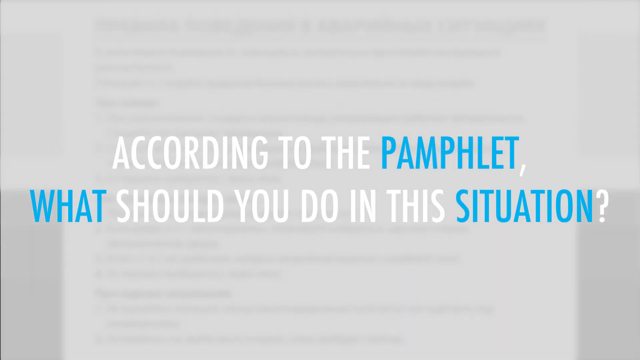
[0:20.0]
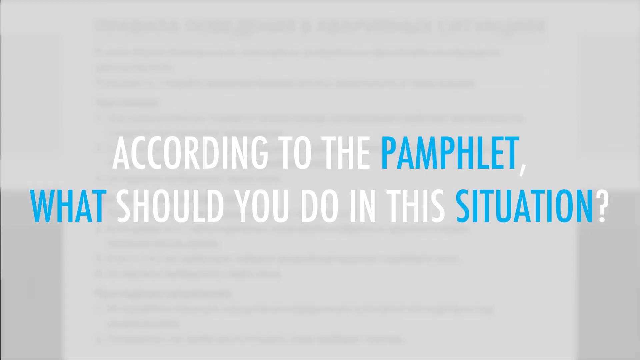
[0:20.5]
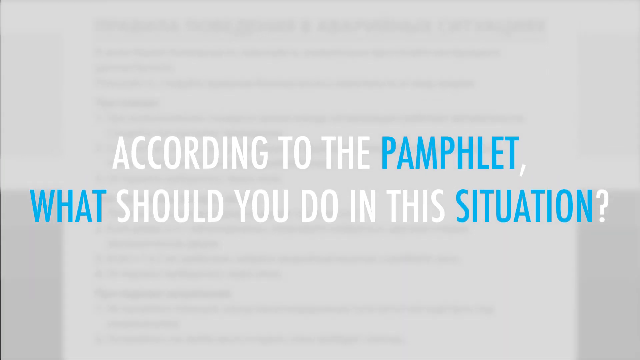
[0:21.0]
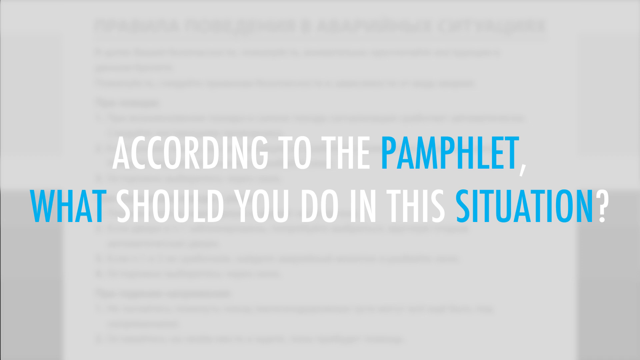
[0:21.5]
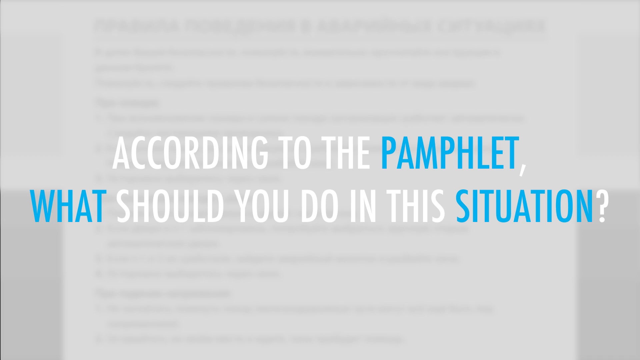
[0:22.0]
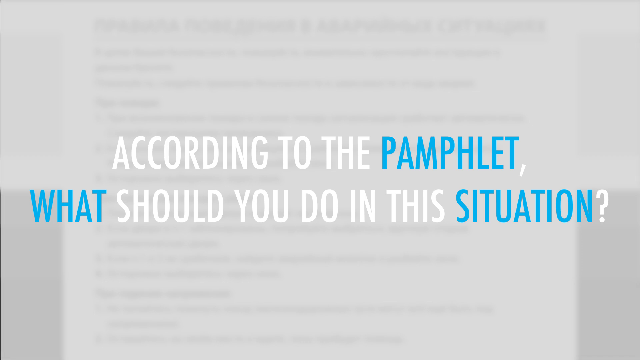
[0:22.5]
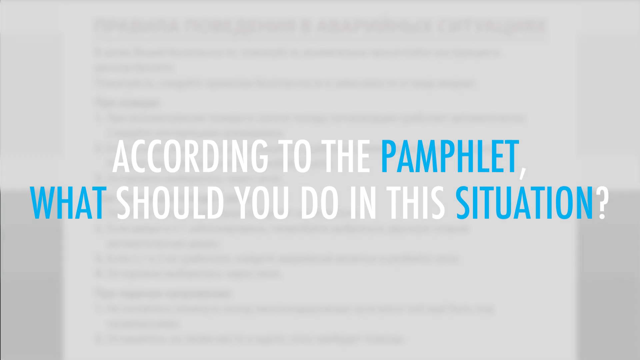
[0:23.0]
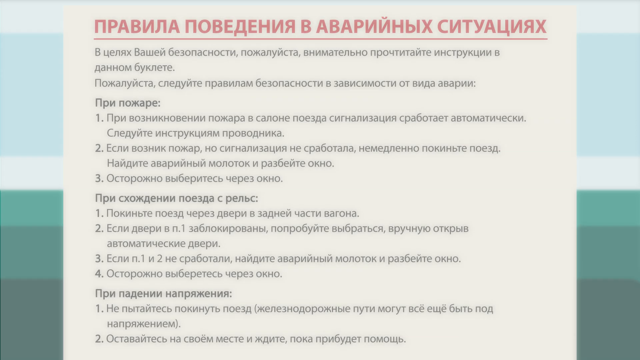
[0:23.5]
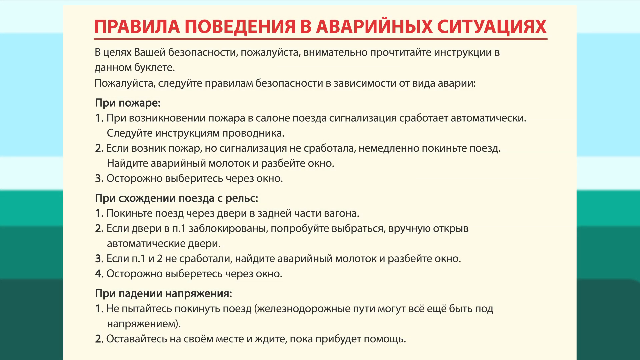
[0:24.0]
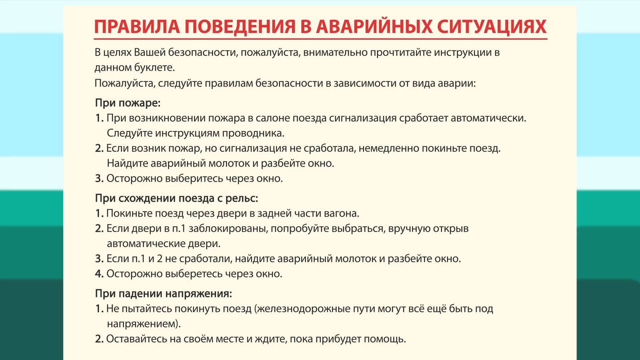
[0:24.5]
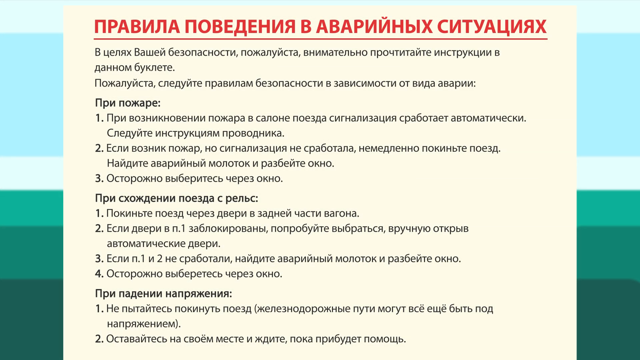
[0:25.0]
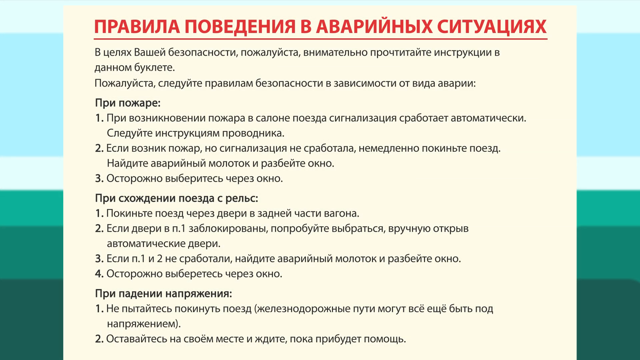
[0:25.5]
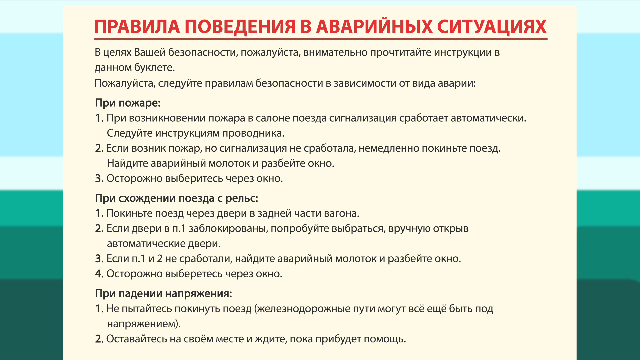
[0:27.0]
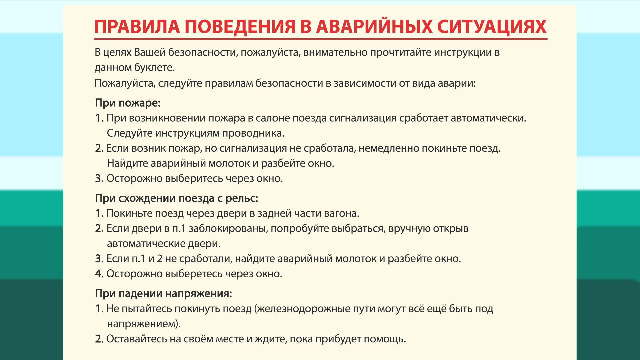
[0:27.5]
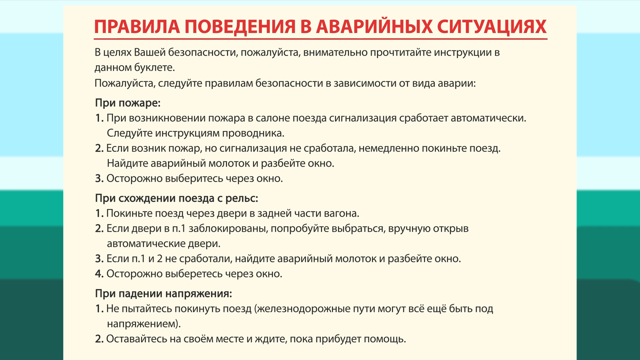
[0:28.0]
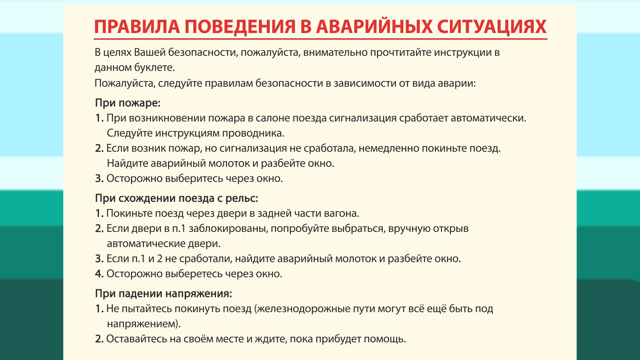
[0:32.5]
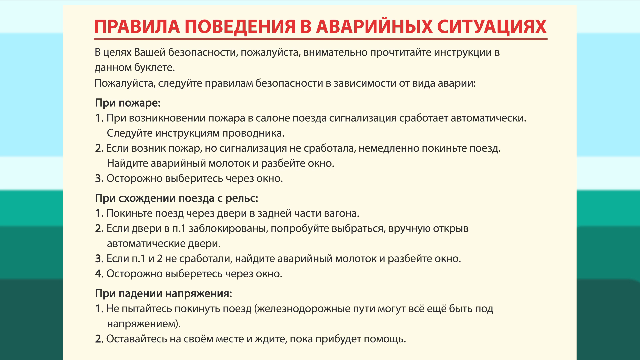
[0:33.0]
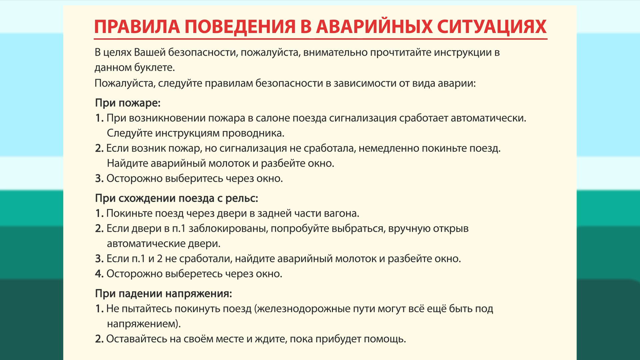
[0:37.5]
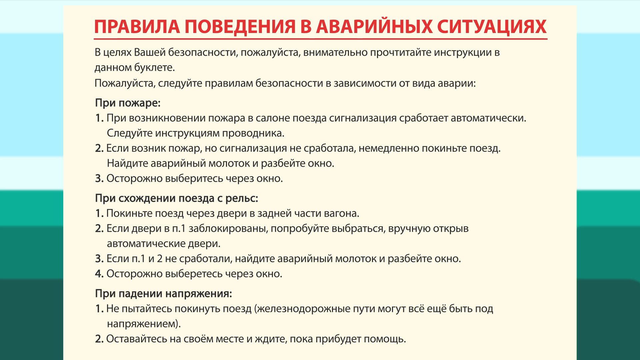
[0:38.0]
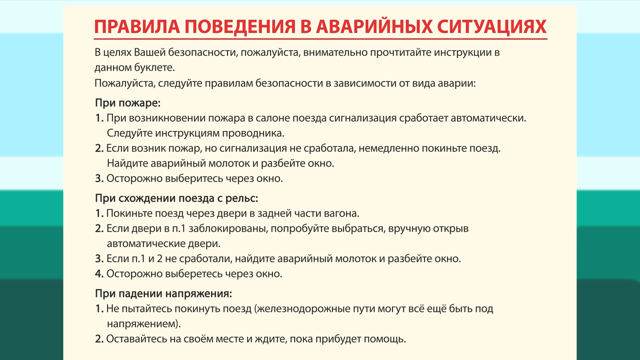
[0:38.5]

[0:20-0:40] A question is written above a gray background: "according to the pamphlet, what should you do in this situation?" The top line, centered, reads "according to the pamphlet," with "pamphlet" in blue and the rest in white. The bottom line reads "what should you do in this situation," with "what" and "situation" in blue and the rest in white. The video then transitions to a page written in what appears to be Russian. The heading is in red and the rest is in black, on a white page. Bold text is used throughout for the different numbers and the subheadings. There are three subheadings on the page: the first has three points, the second has four points, and the third has two points.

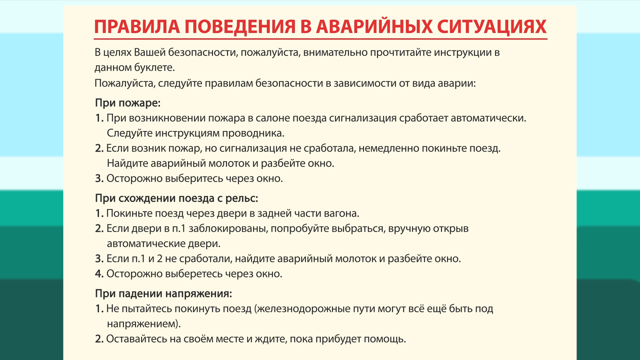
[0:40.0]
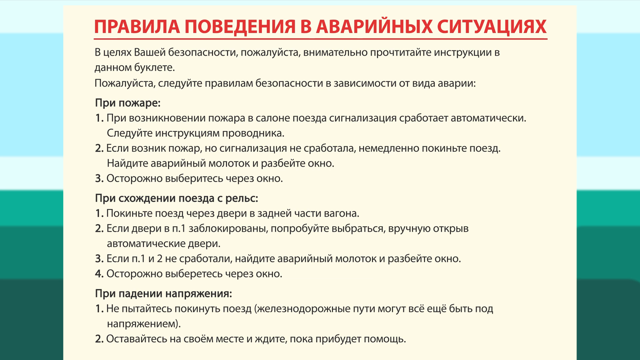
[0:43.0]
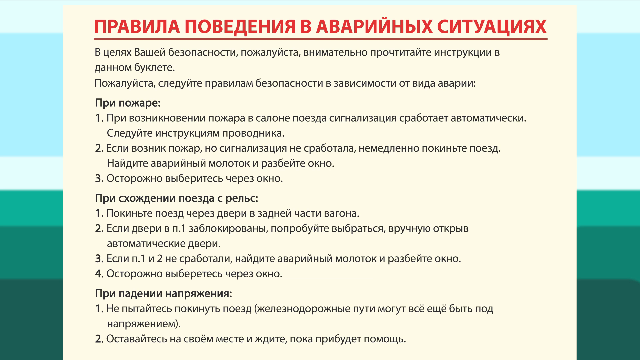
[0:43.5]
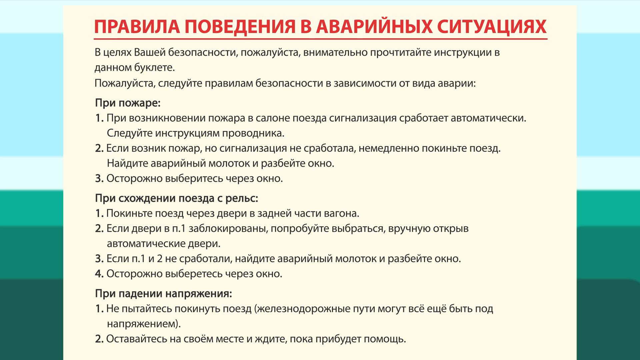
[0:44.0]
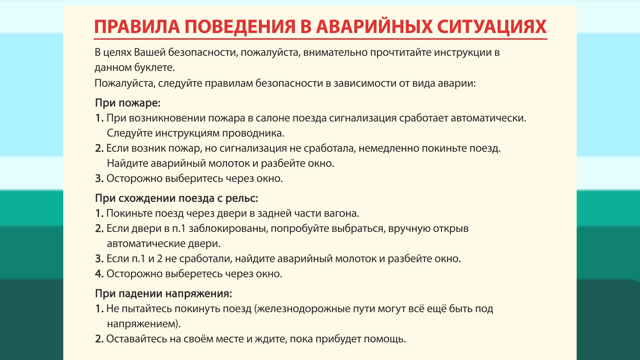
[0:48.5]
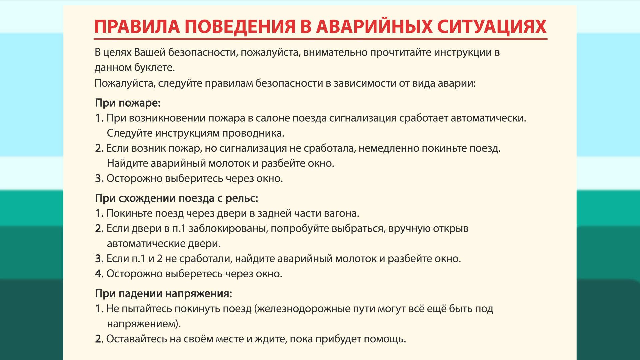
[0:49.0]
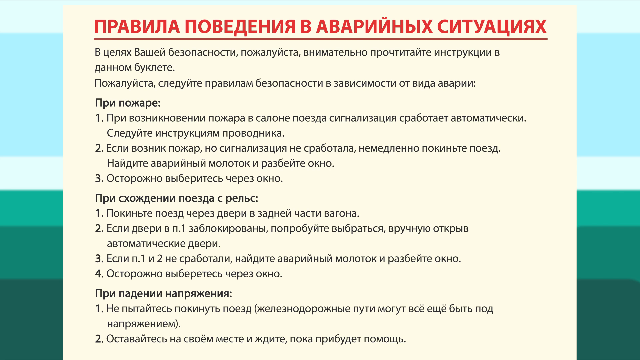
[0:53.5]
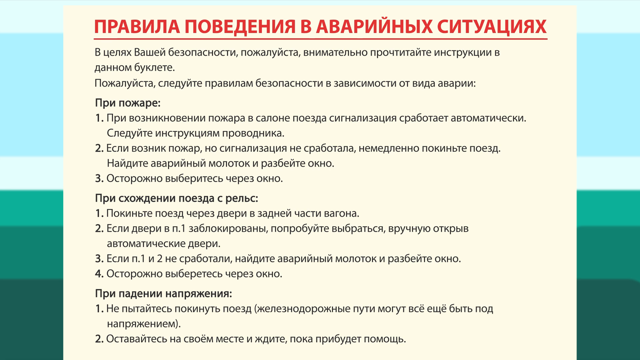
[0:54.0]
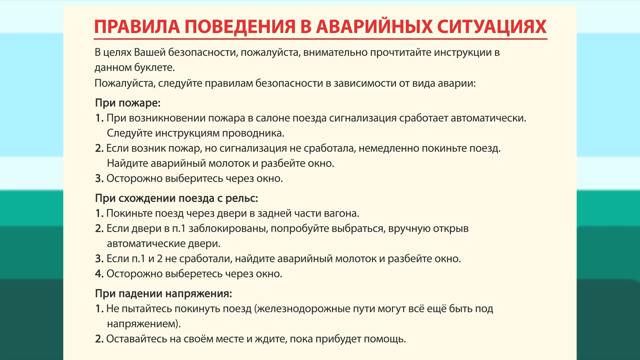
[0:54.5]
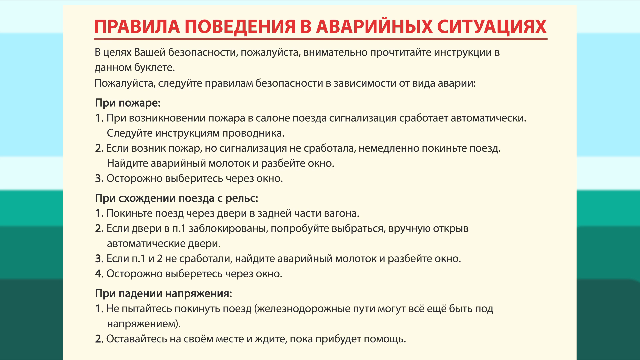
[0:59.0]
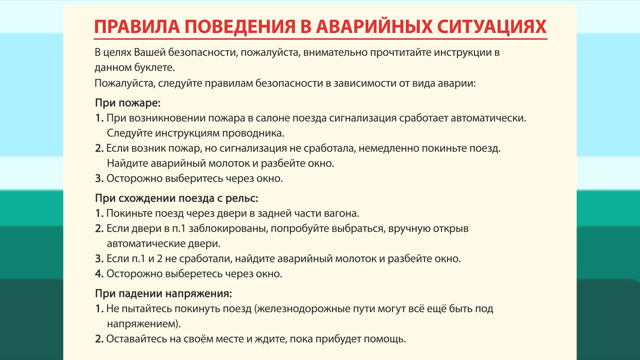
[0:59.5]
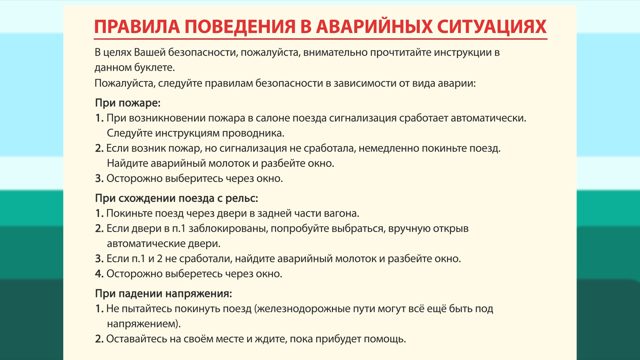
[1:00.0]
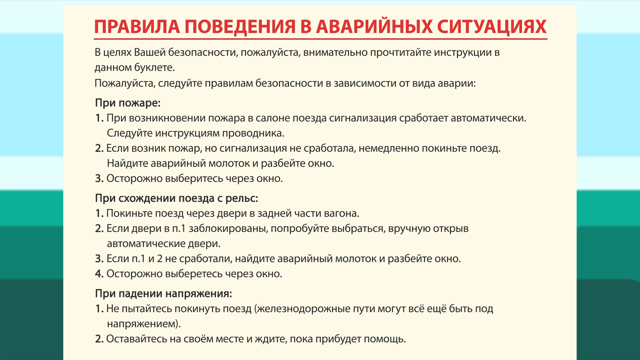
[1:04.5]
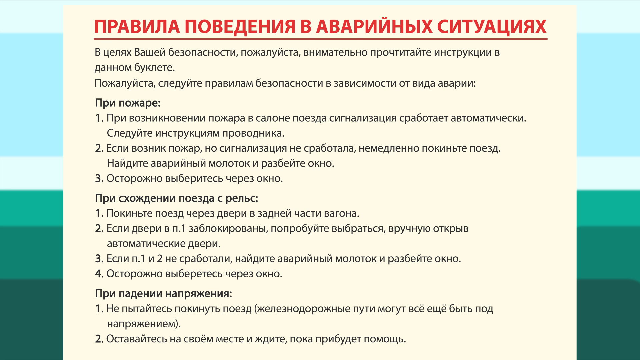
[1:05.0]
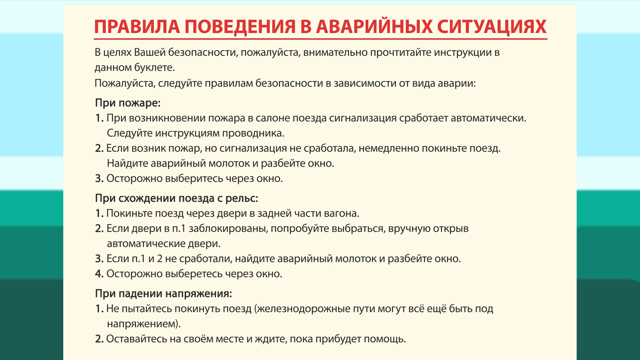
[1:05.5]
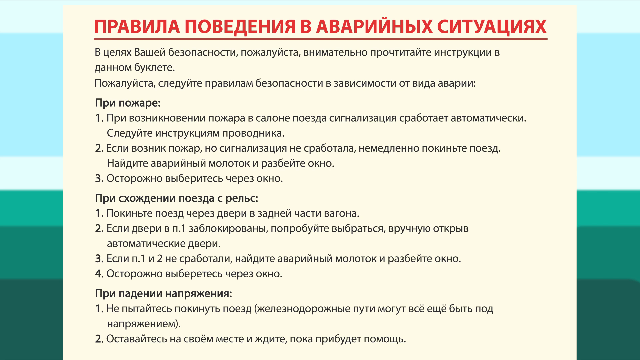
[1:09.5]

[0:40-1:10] The page shows points, each written in Russian. The heading is underlined and written in Russian. The page has three bolded subheadings: the first has three points, the second has four points, and the third has two points. A passage is written underneath the title, likely explaining what is written below. The page contains a host of information in the language. Behind the page, the background is made of vertical lines of different widths, with colors from top to bottom of turquoise, light blue turquoise, a darker shade of light blue, a lighter shade of dark blue, and a dark shade of dark turquoise. The first band is small, the second slightly larger, the third small, the fourth small, the fifth bigger than the fourth, and the sixth bigger than the fifth.